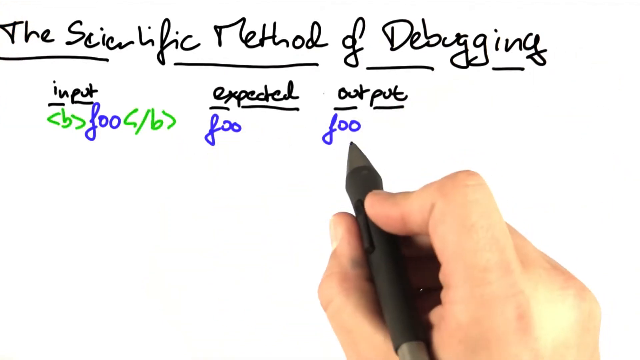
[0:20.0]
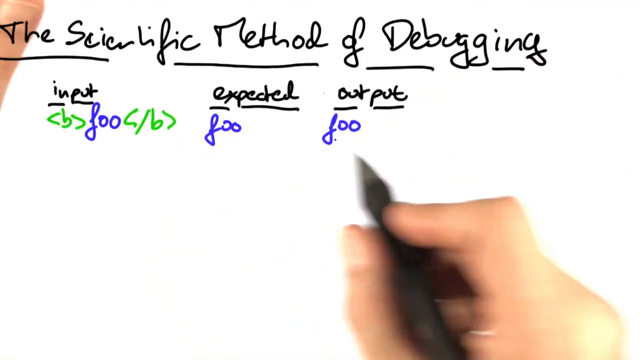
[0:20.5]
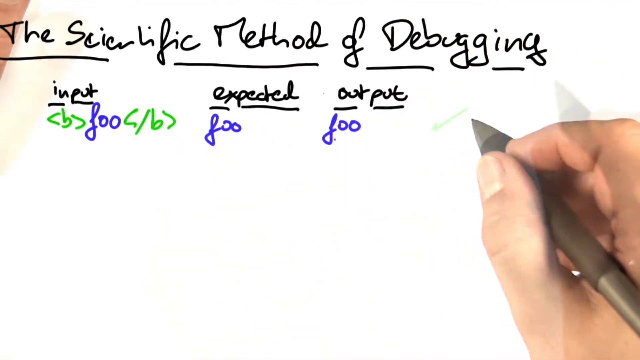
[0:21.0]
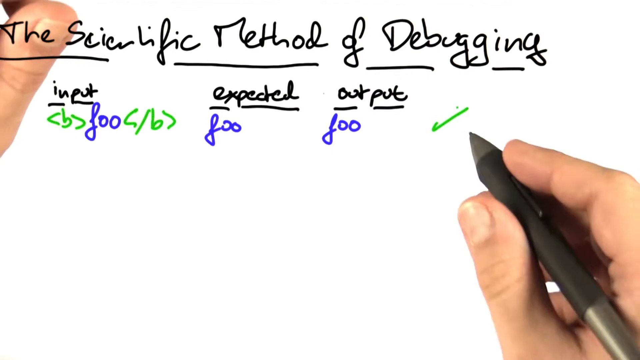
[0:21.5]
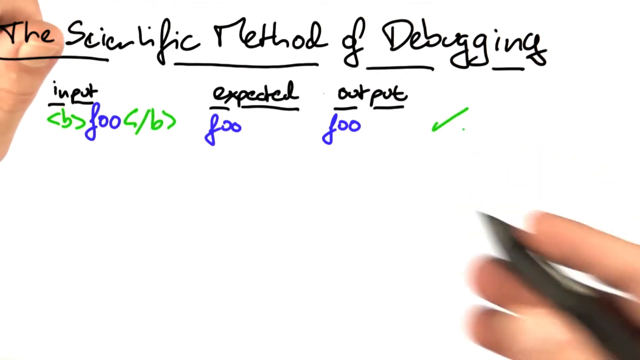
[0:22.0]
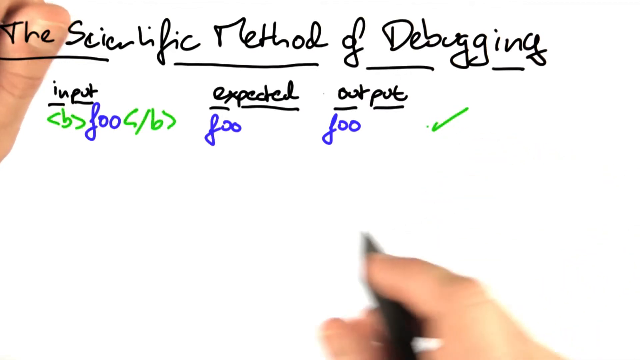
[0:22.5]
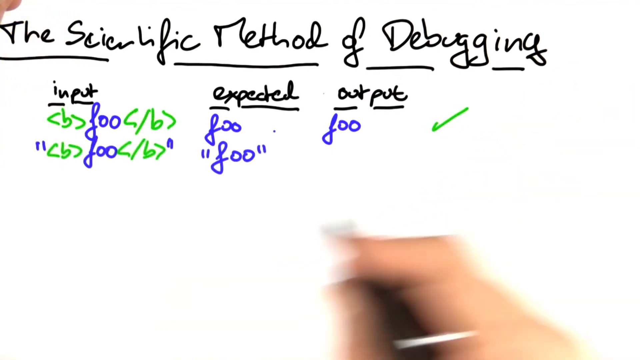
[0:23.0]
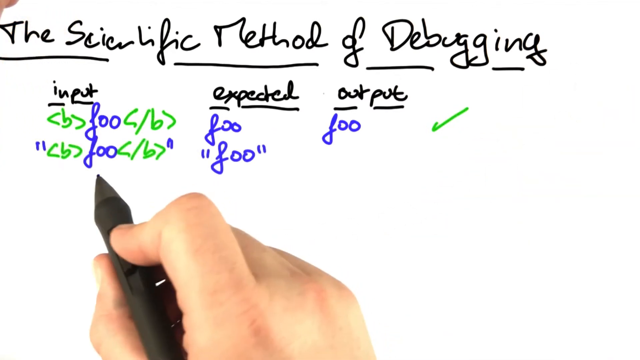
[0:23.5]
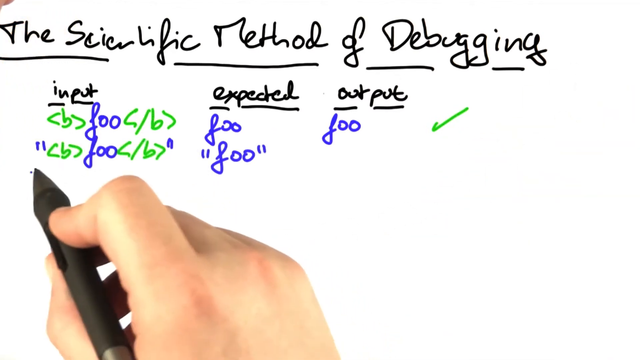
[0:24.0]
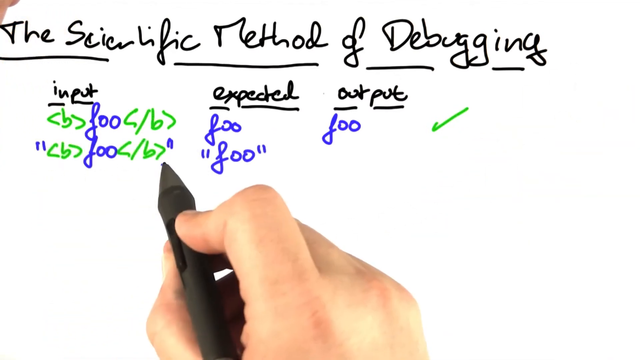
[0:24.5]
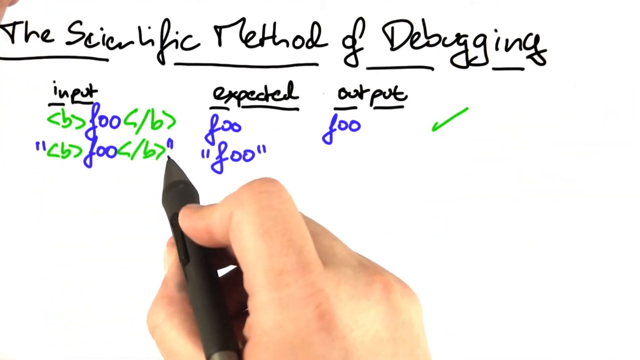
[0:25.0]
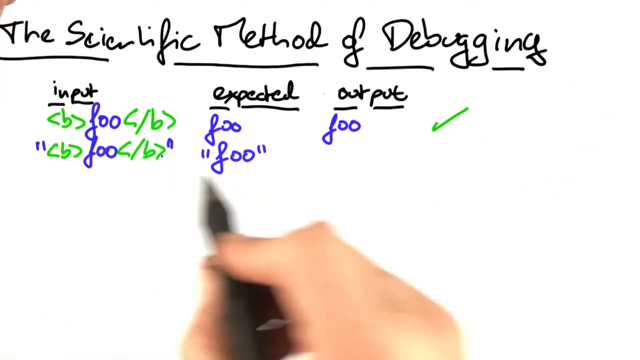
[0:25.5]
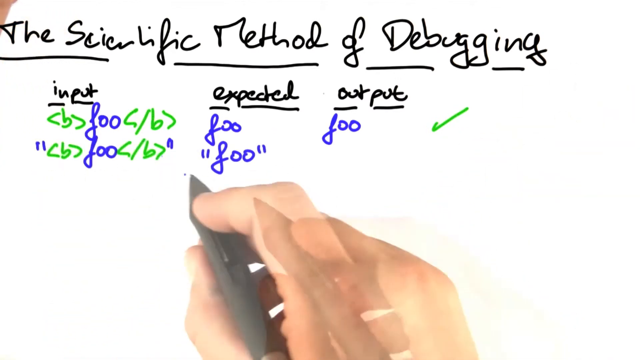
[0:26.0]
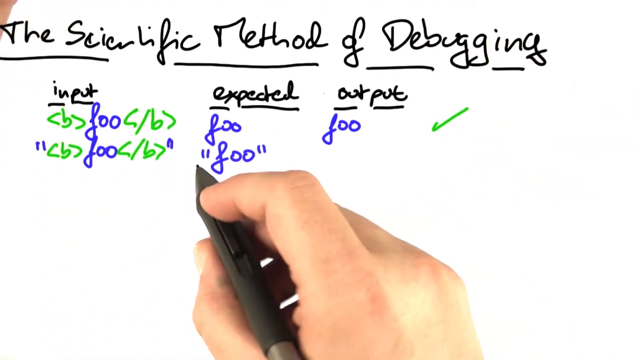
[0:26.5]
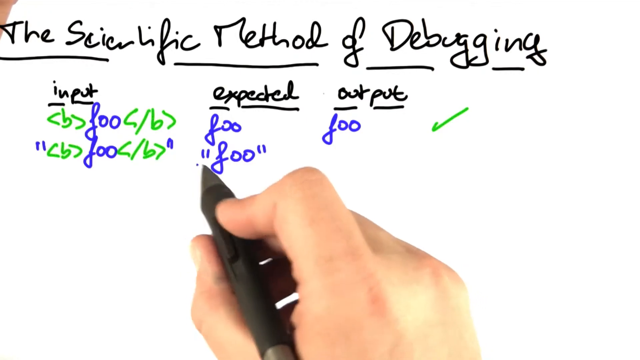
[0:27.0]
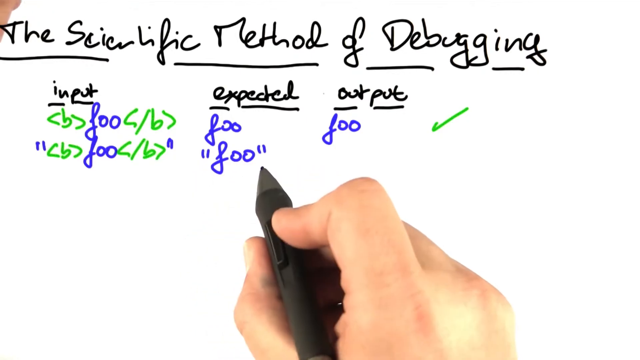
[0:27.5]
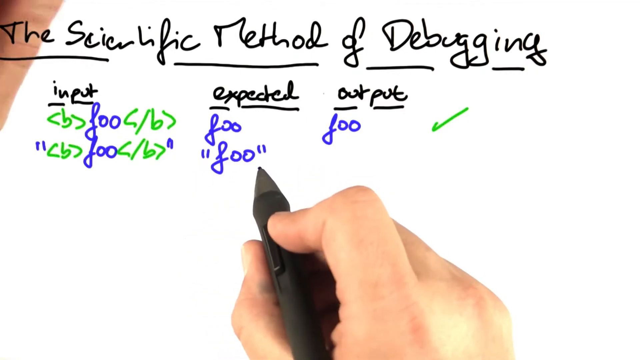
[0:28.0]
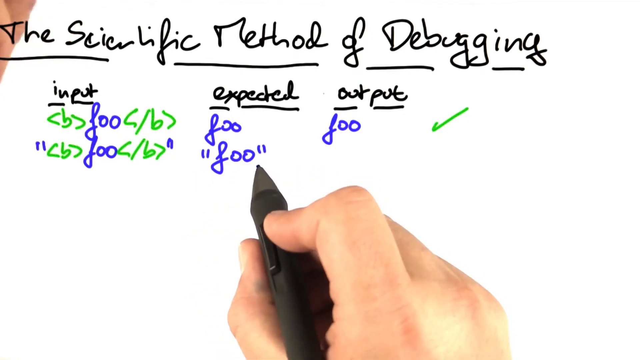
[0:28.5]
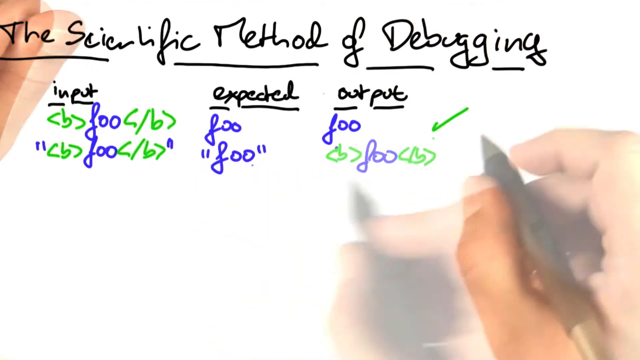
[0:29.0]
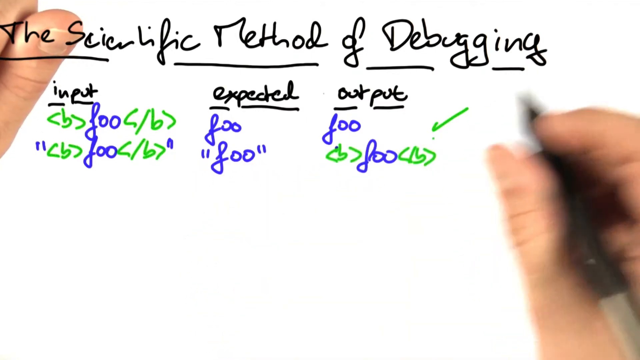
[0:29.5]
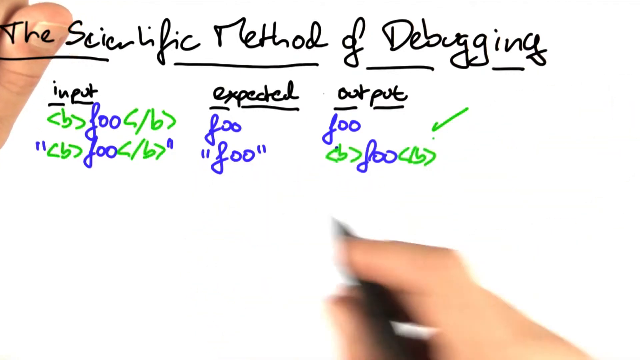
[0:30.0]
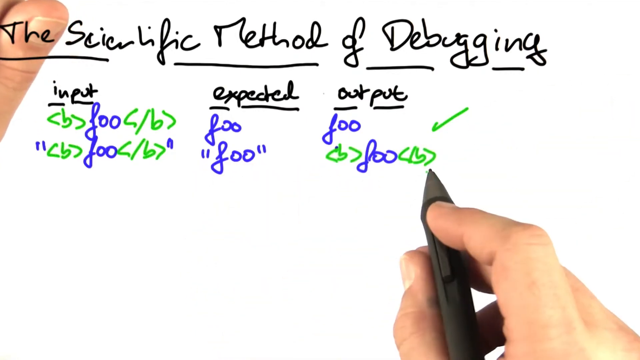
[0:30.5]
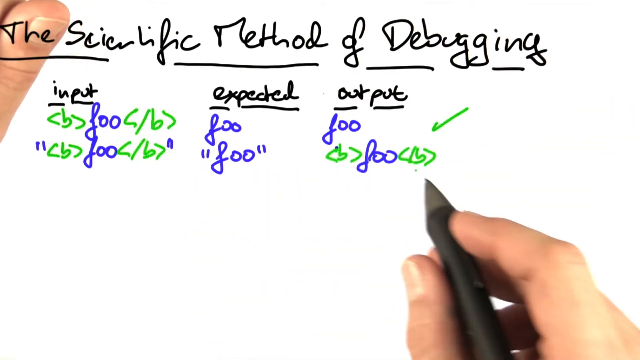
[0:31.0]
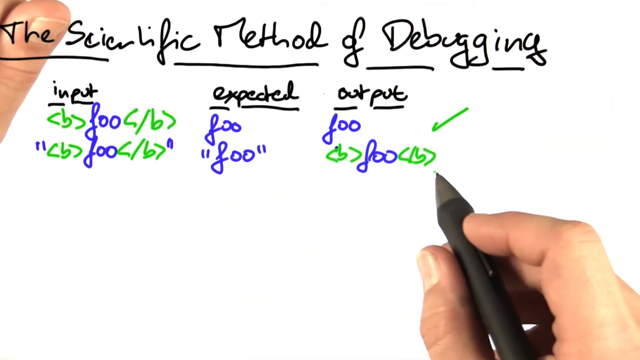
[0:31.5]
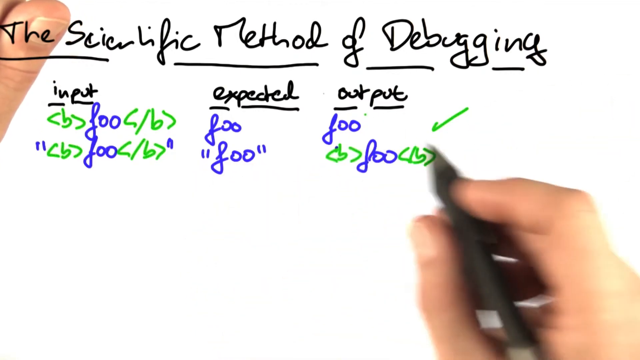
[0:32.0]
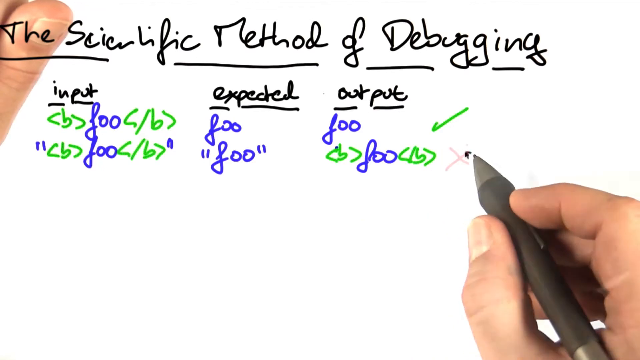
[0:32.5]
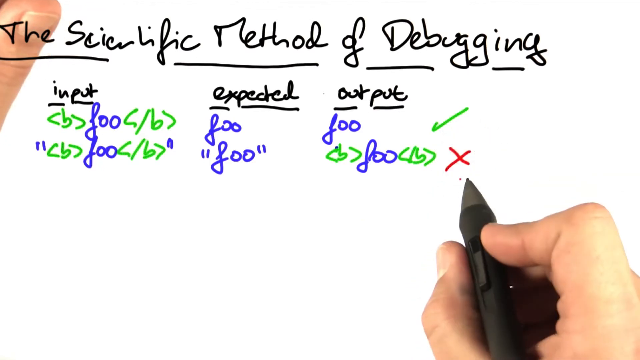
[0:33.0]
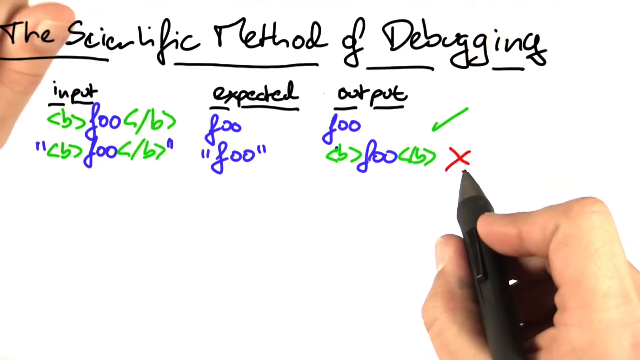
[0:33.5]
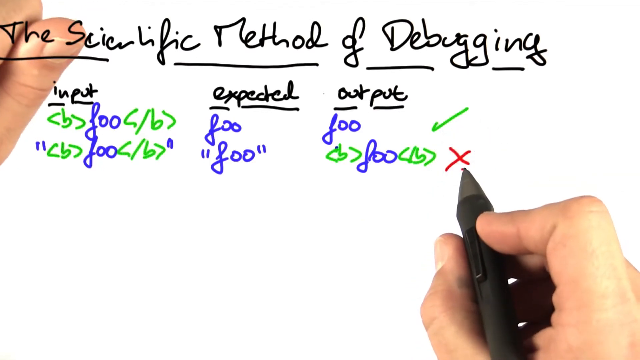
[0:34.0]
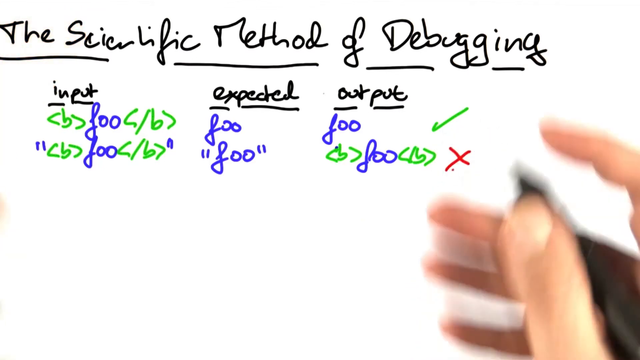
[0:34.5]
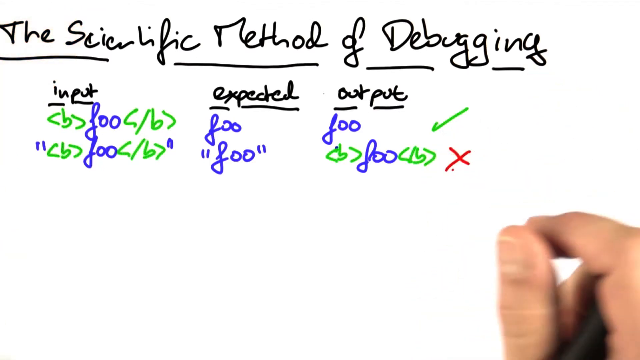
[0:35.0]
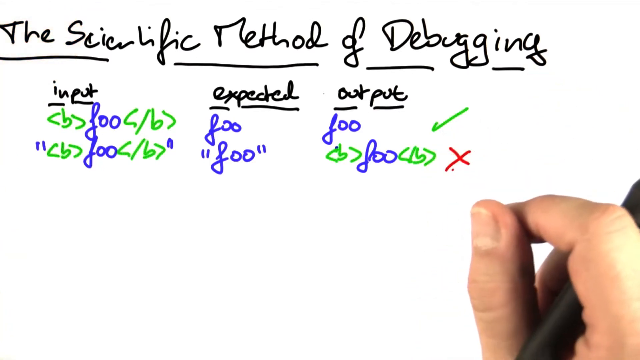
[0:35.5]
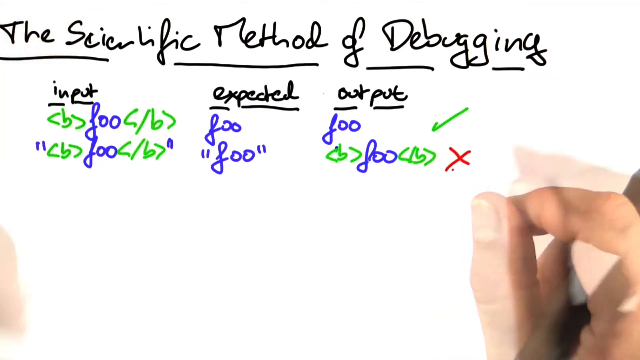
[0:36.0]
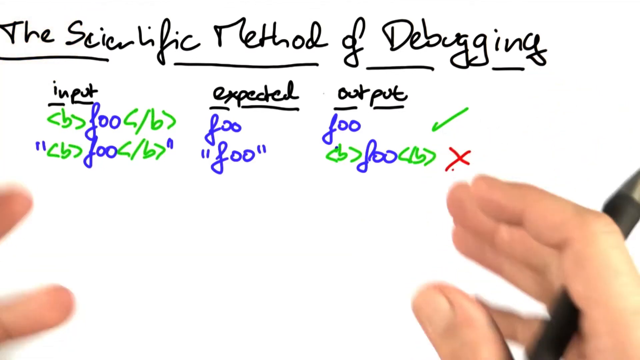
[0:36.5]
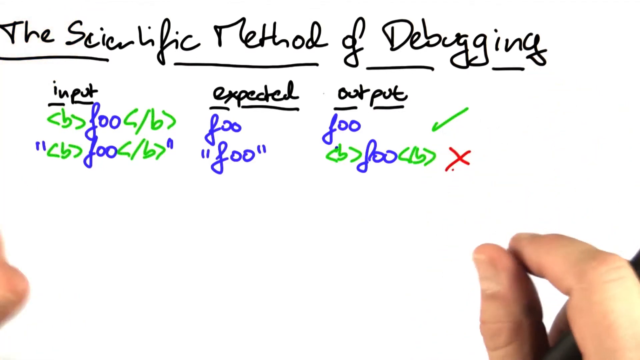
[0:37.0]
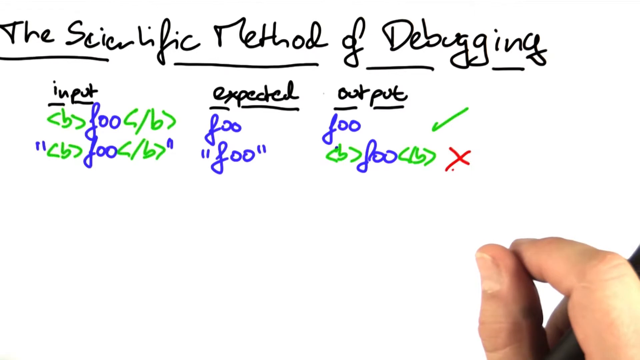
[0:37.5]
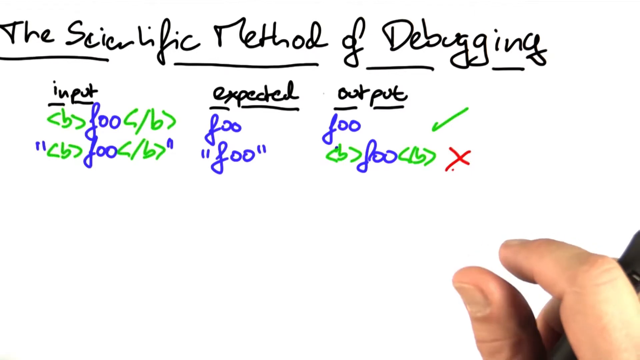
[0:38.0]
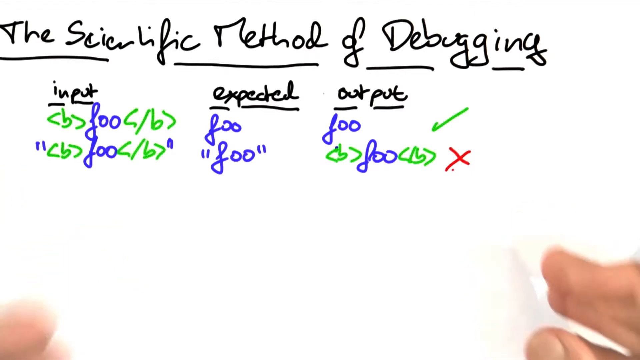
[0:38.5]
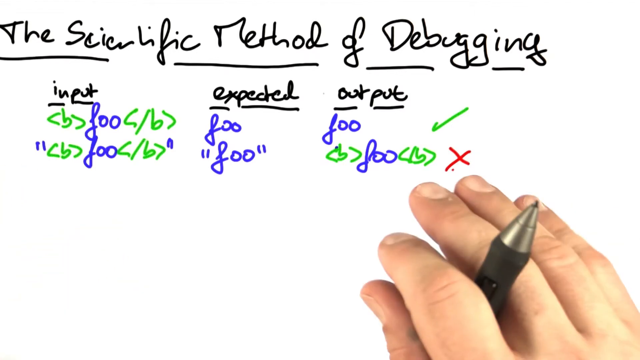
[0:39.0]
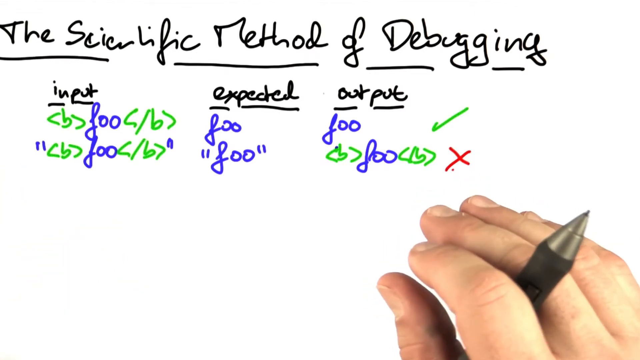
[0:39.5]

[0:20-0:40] The screen shows the same layout. Next to the output, the person puts a green tick. Below the first input, he writes quotation marks containing b in brackets, foo, and slash b in brackets, closing the quotation marks at the end. Below the expected, he writes quotation marks with foo between them. He makes an underlining gesture under the input, then the same underlining gesture under the next foo in quotation marks. In the output column, he writes b in brackets, foo, slash b in brackets. He compares the first output with the second and puts a red cross after the second output, marking it as incorrect. He gestures with his hand, probably explaining something. There are some scene changes, or his hands move places unexpectedly.